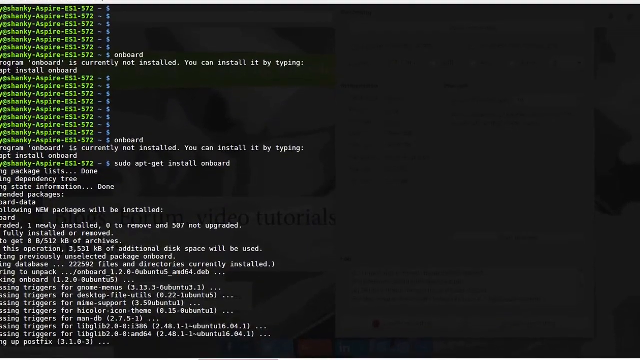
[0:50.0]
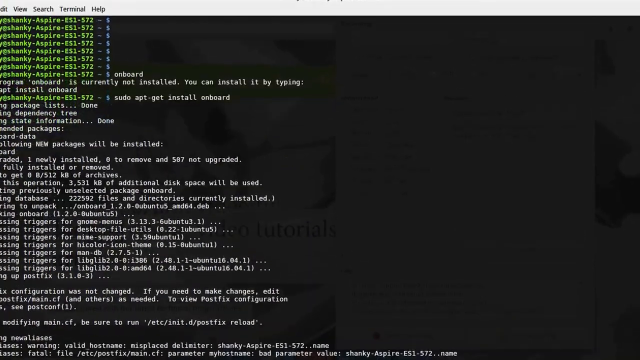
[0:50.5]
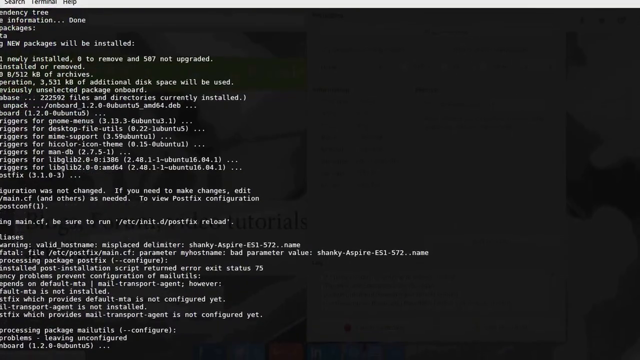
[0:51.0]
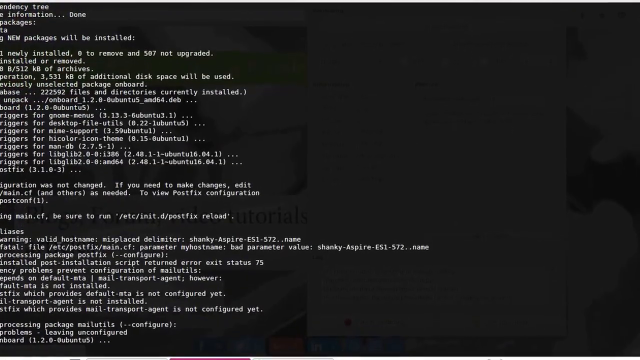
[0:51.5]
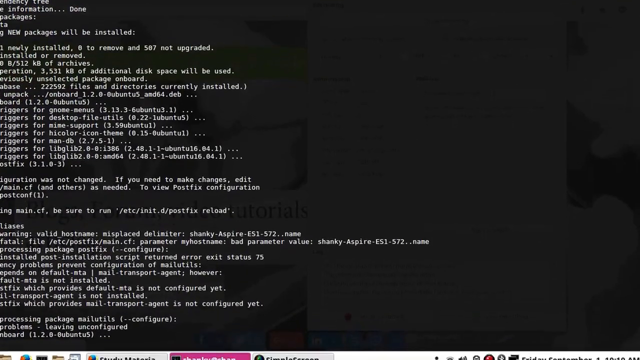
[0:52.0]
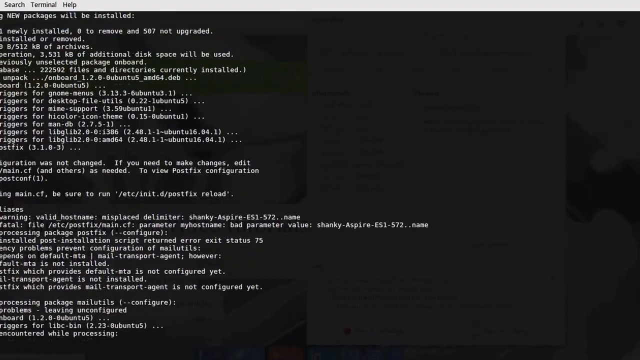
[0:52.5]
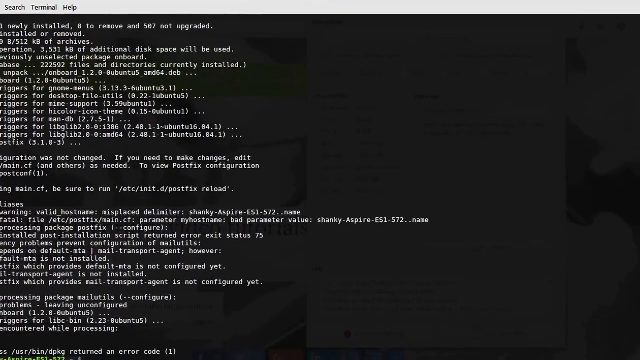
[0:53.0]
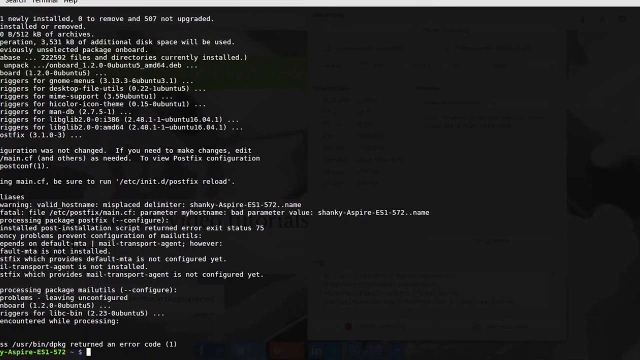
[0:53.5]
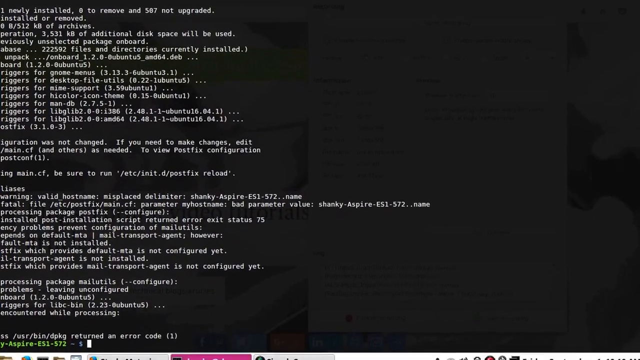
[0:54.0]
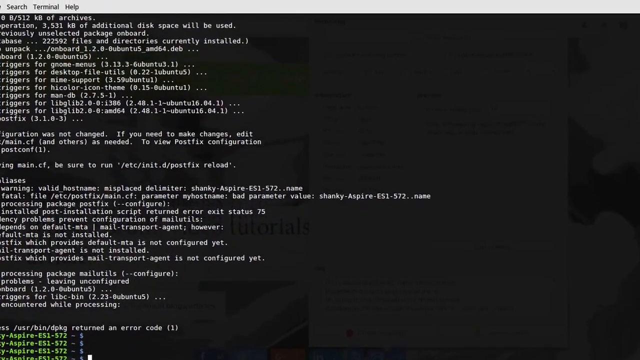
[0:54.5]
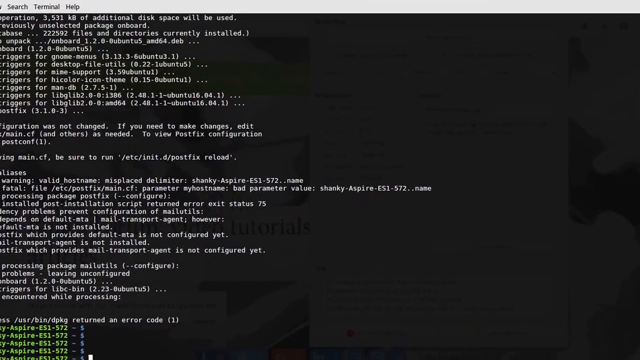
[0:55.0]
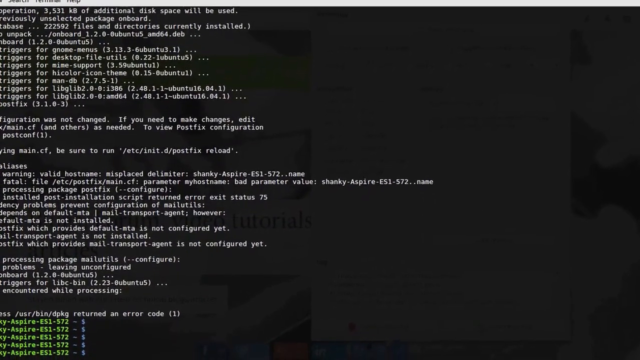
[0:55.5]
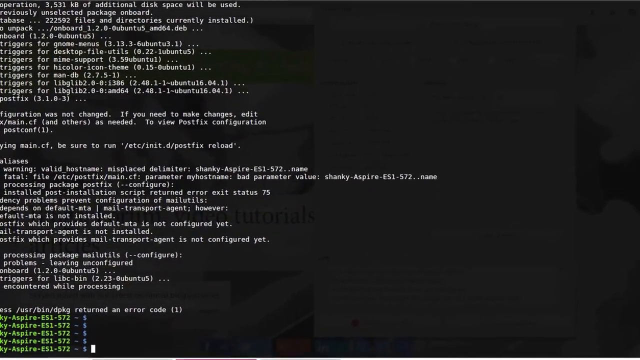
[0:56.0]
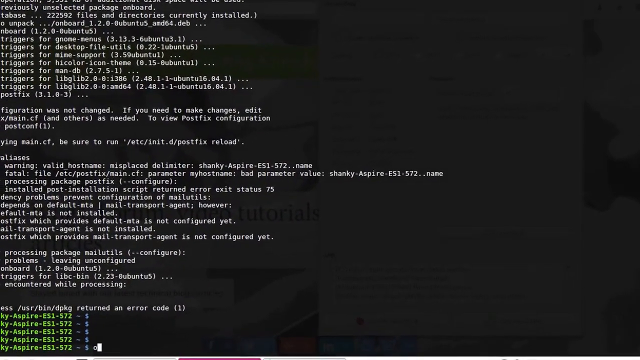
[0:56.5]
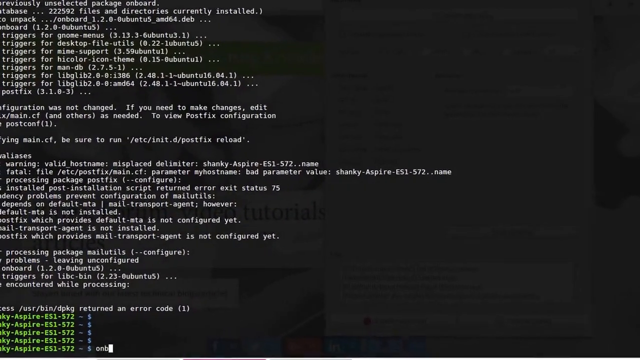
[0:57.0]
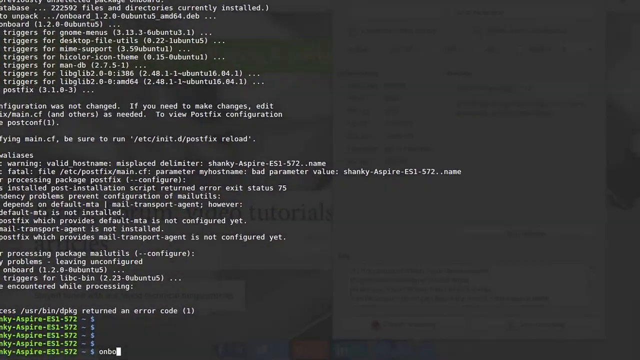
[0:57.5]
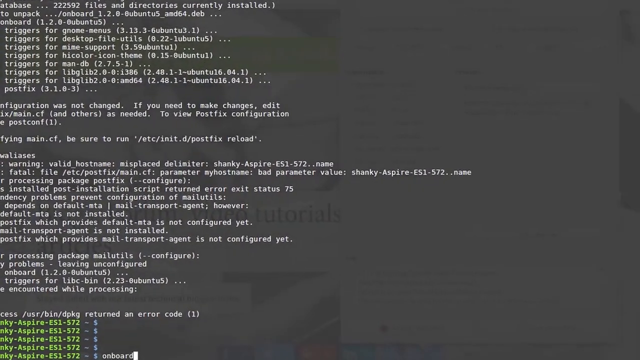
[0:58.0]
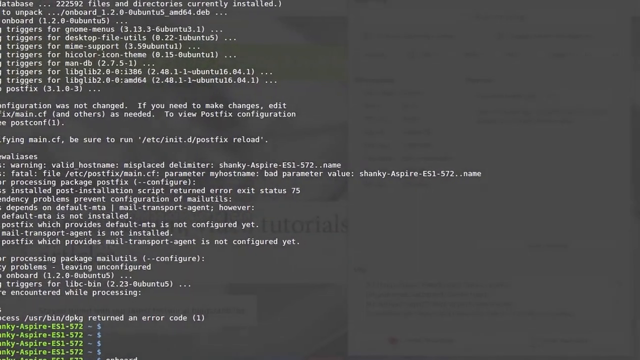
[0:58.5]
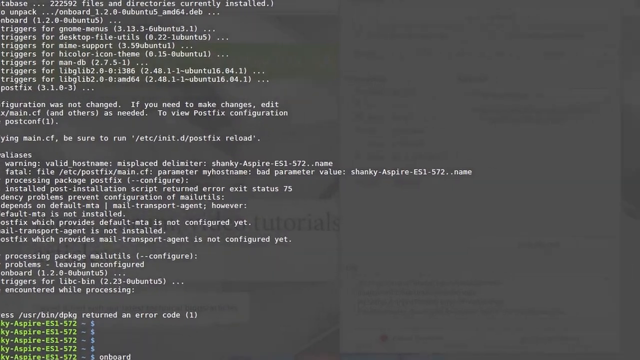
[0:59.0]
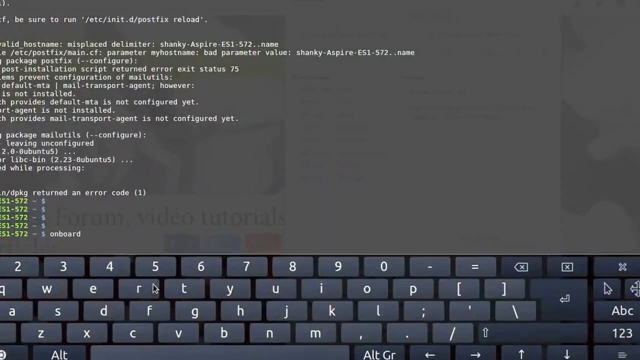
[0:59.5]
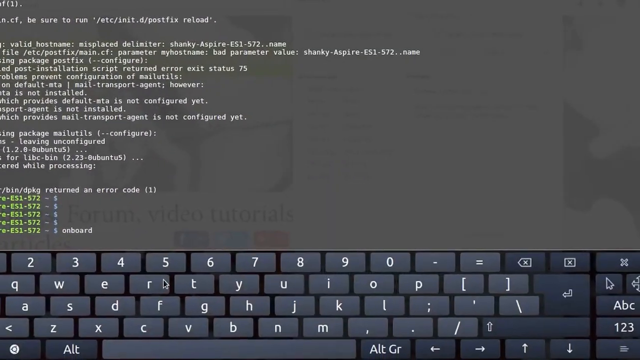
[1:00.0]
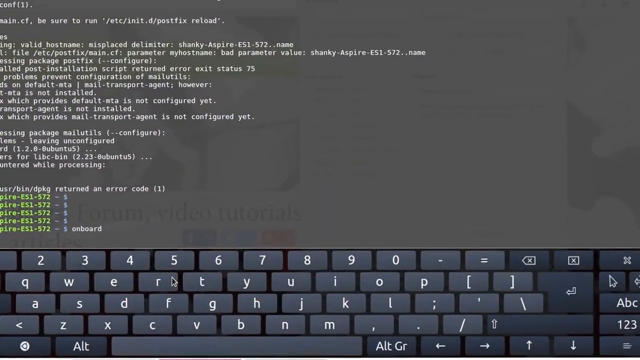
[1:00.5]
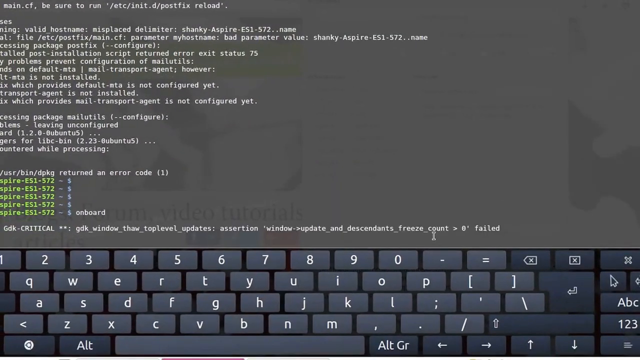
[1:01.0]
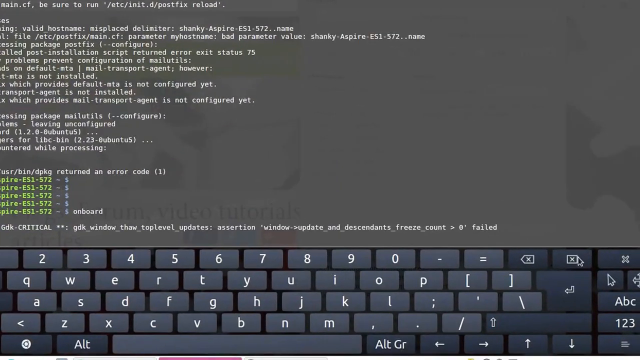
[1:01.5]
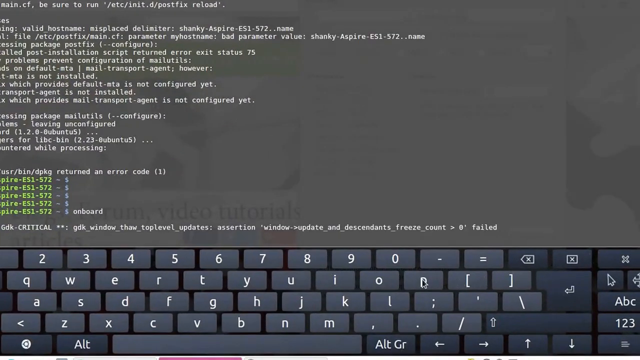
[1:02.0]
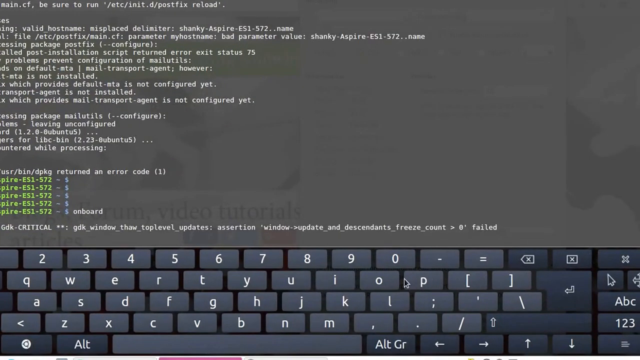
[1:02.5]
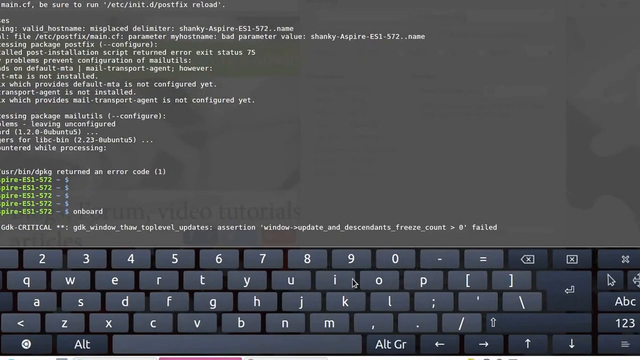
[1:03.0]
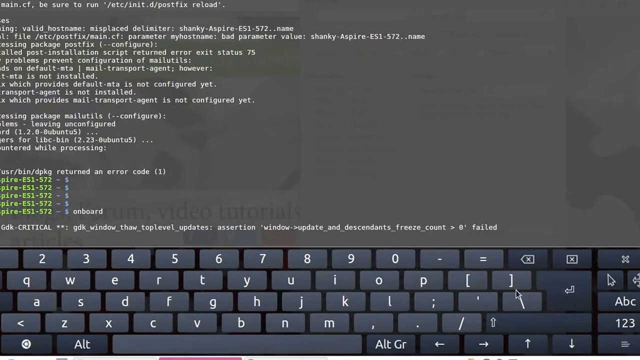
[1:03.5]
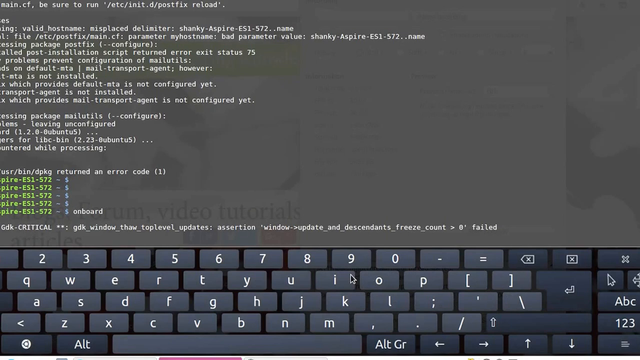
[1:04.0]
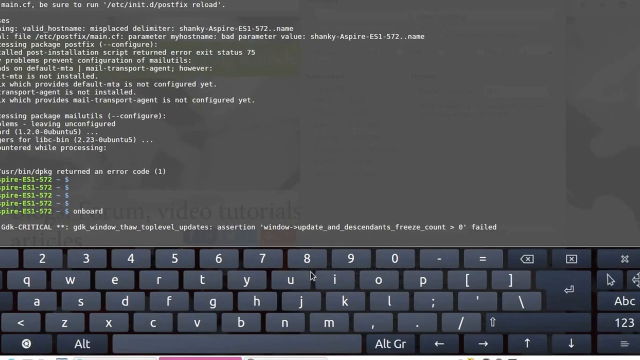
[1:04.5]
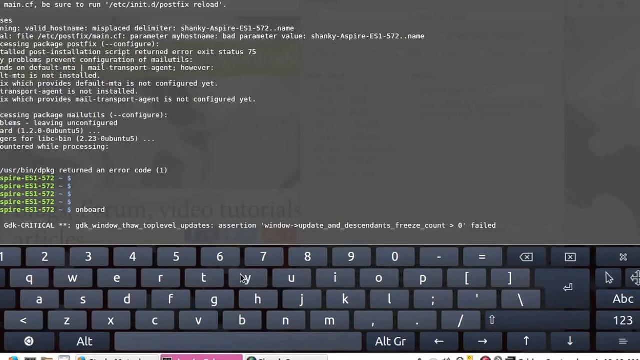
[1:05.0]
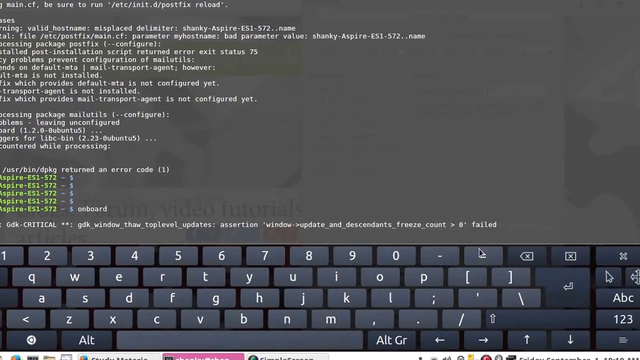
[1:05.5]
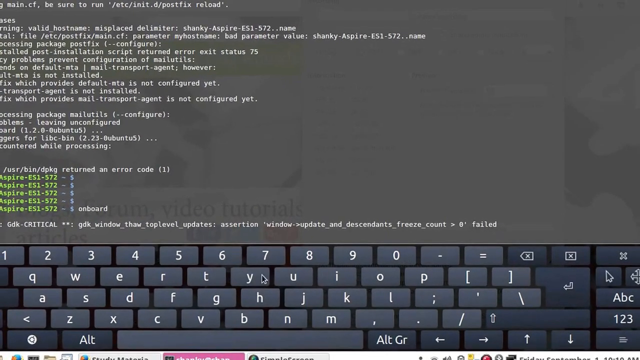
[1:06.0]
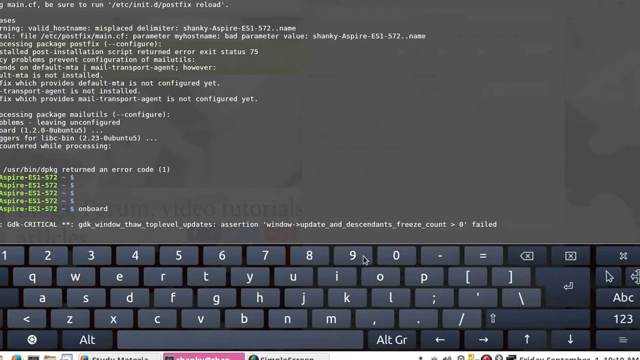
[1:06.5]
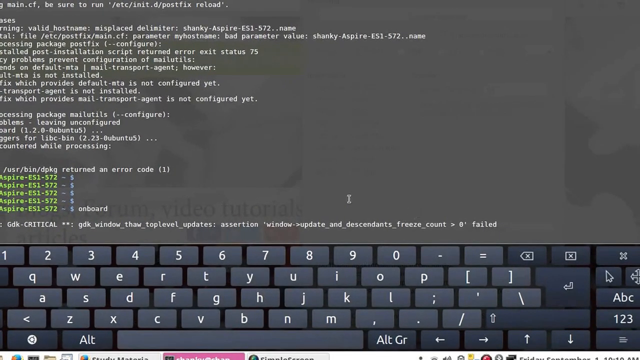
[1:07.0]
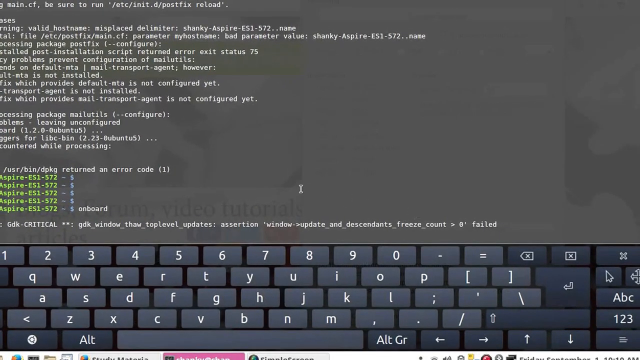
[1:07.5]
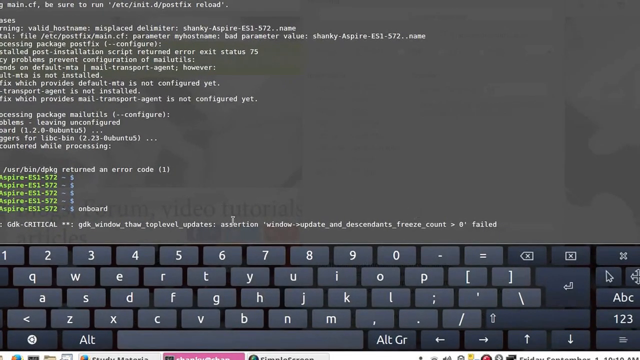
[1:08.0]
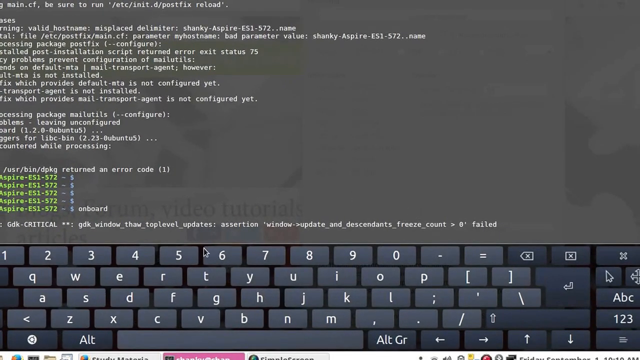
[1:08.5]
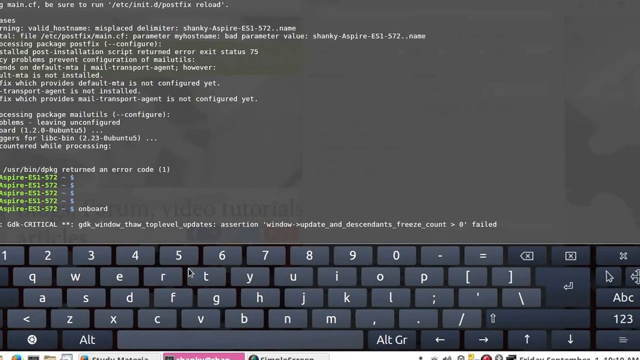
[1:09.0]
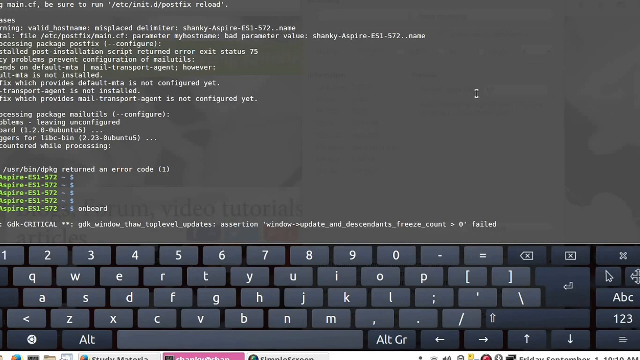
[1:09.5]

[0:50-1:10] The screen background is once again black, with a faded web page behind it. The green text "at shanky-aspire-es1-572-$" repeats seven times, and on the seventh it says "onboard. Program onboard is currently not installed. You can install it by typing," followed by an illegible part and "pt-install-onboard." The green text then repeats another nine times, and again it says "on board. Program on board is currently not installed. You can install it by typing," followed by an illegible part and "PT install on board," then "at shanky-aspire-es1-572-$ Pseudo apt get install on board." A series of prompts appears, most of which are not legible. The screen scrolls to reveal white prompts down the left-hand side. Then the screen zooms, and typing is visible. A sharp jolt reveals part of a web page. Then a keyboard appears at the bottom of the screen, and a mouse scrolls across it, pointing at different keys.